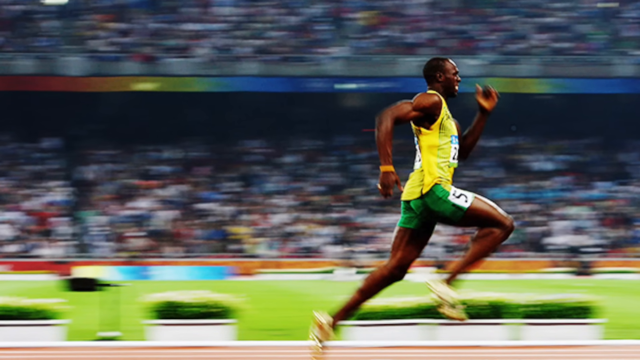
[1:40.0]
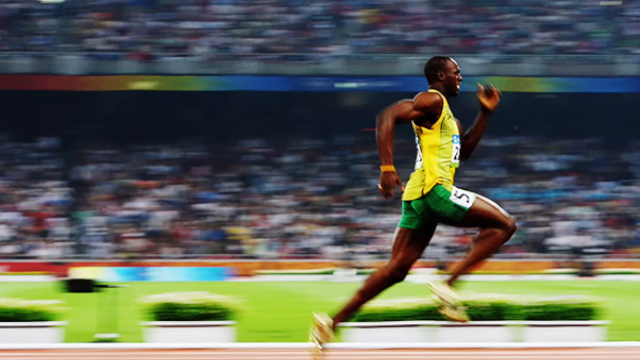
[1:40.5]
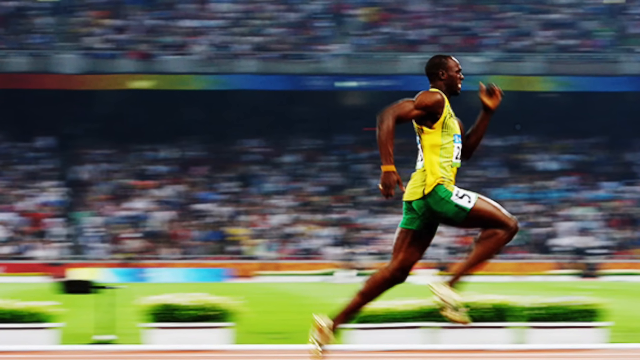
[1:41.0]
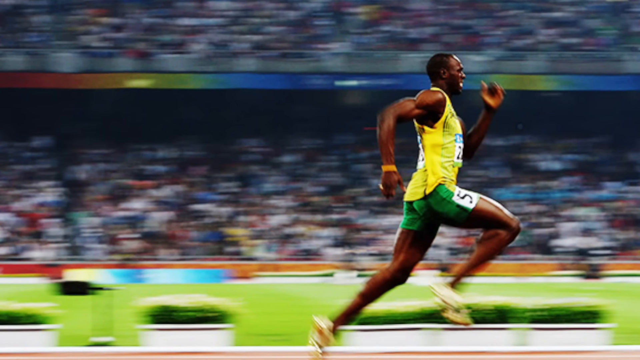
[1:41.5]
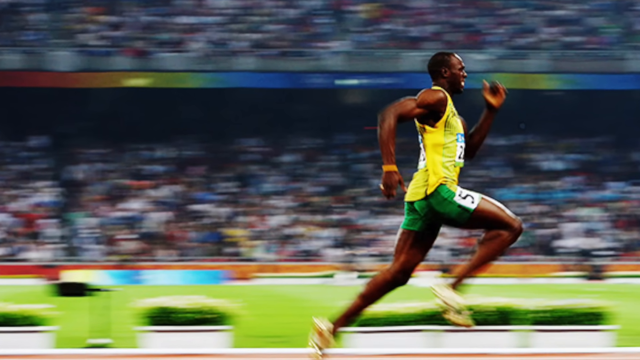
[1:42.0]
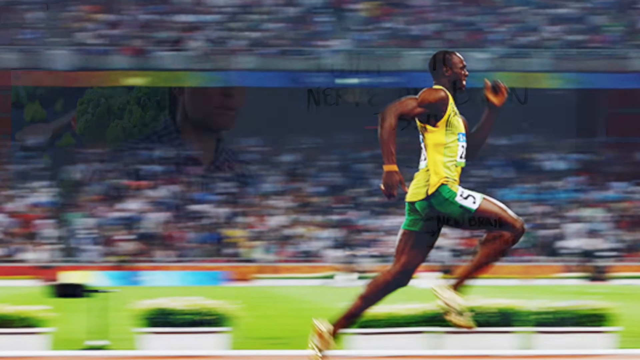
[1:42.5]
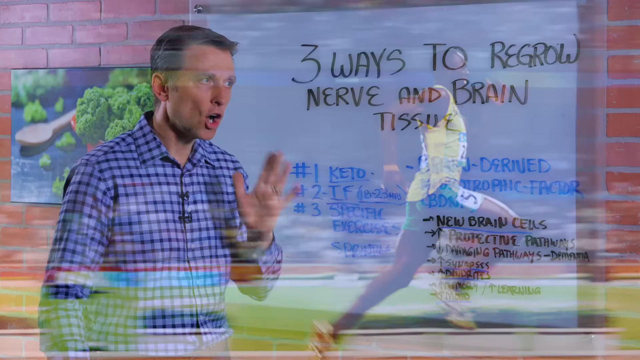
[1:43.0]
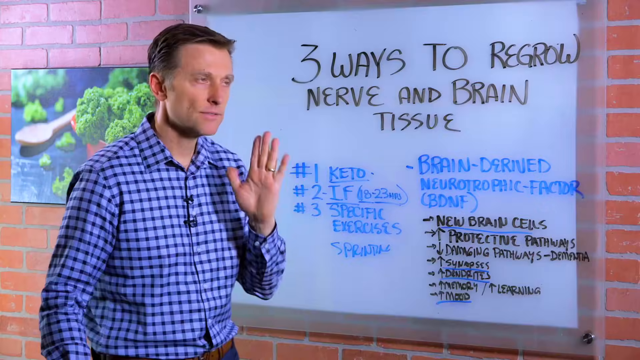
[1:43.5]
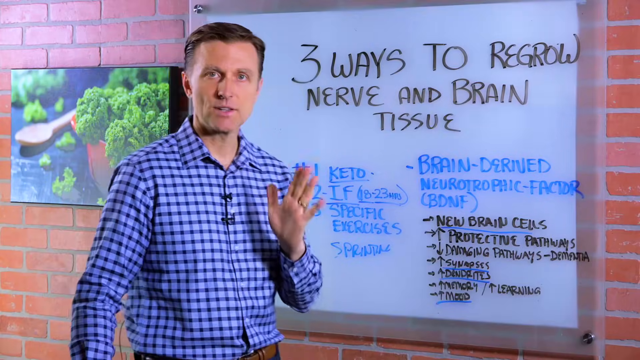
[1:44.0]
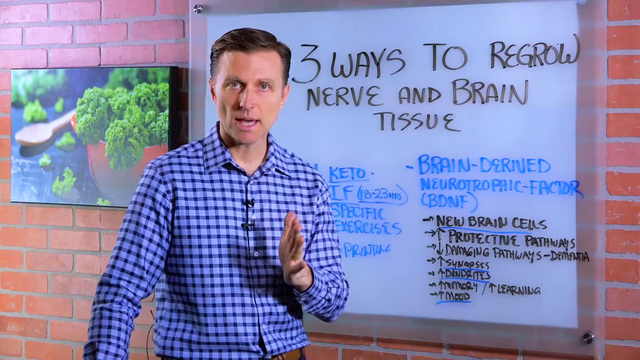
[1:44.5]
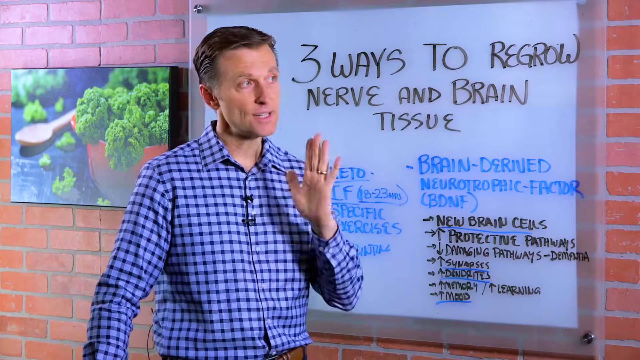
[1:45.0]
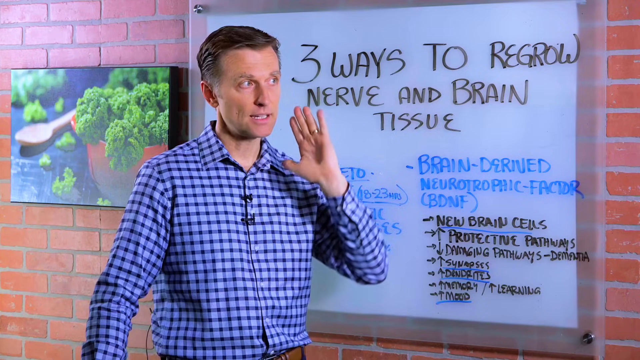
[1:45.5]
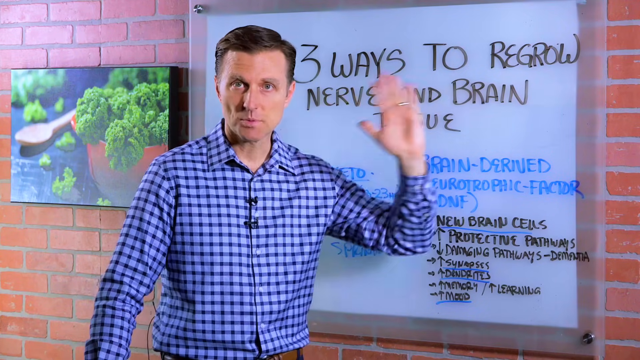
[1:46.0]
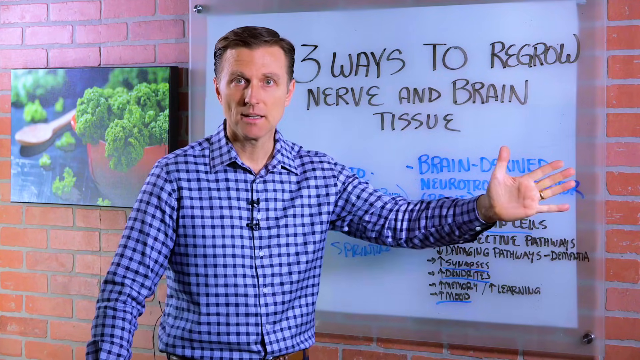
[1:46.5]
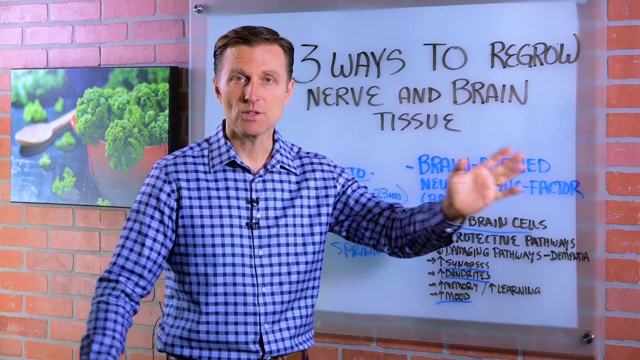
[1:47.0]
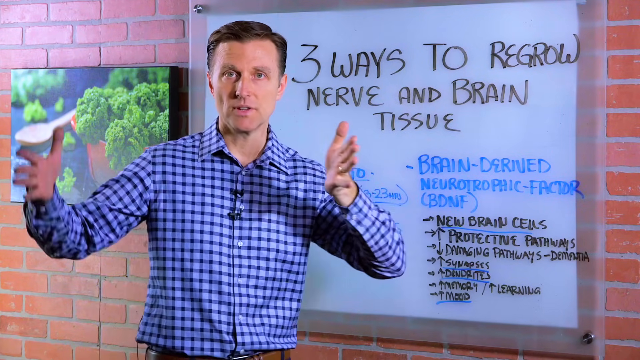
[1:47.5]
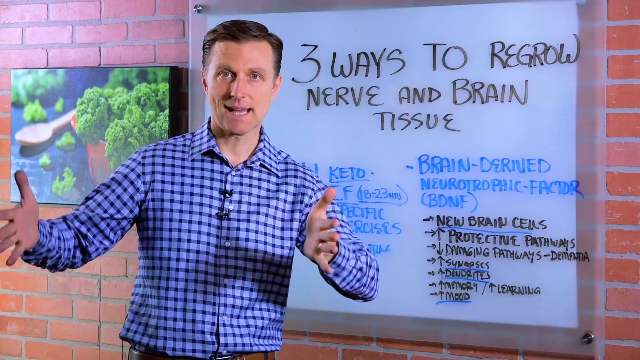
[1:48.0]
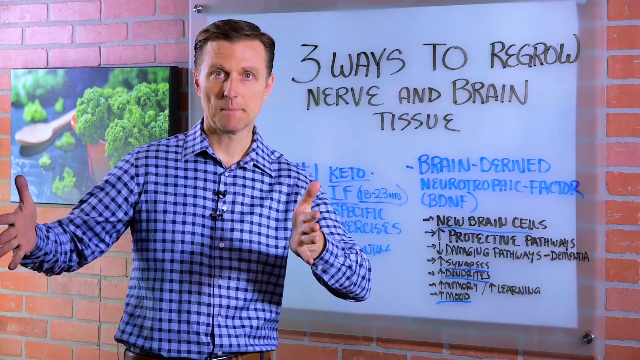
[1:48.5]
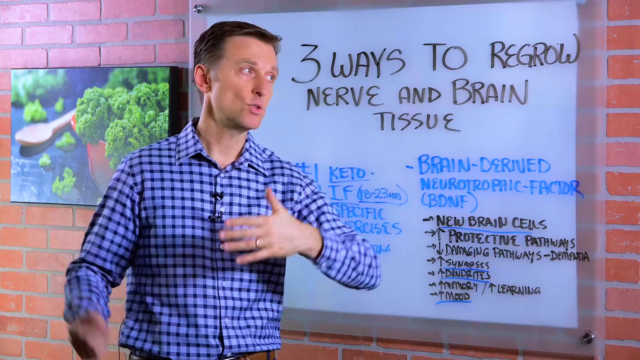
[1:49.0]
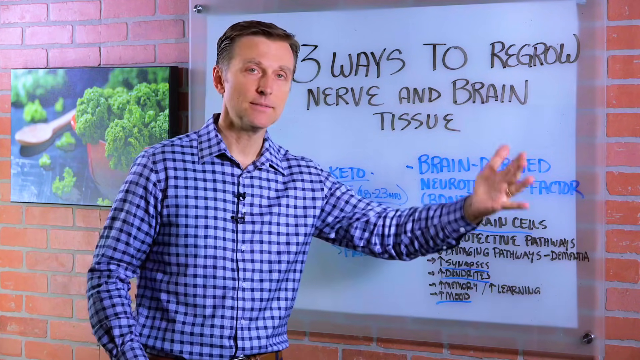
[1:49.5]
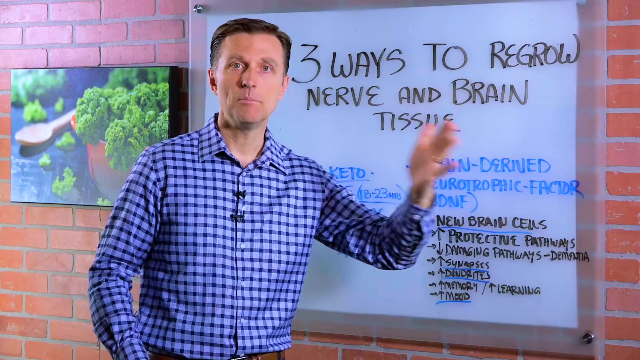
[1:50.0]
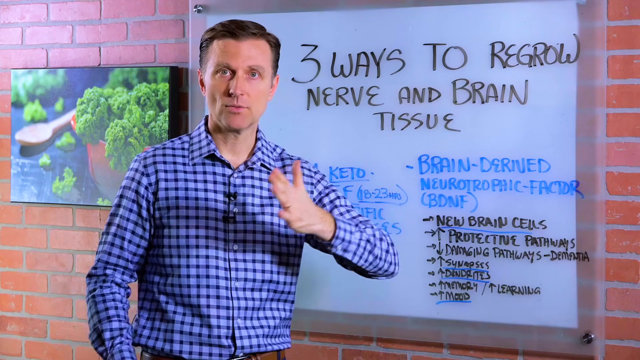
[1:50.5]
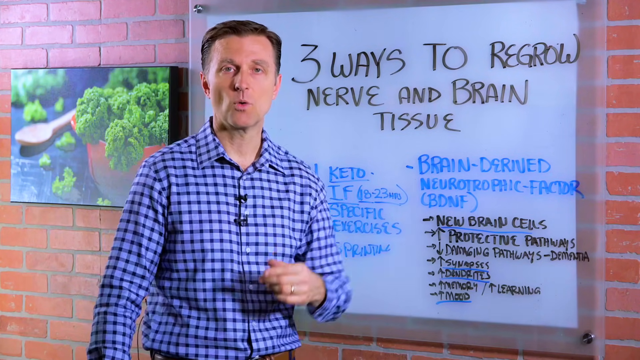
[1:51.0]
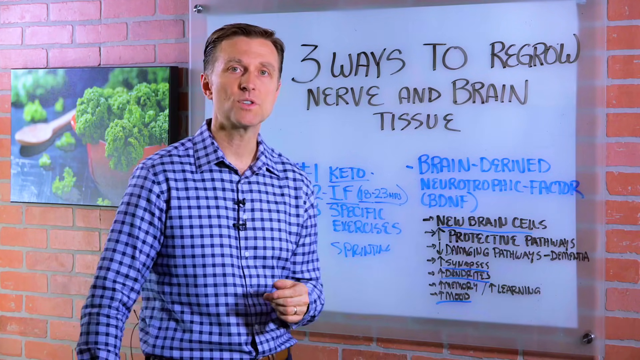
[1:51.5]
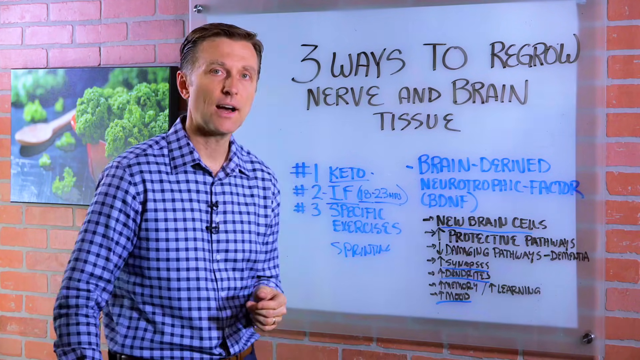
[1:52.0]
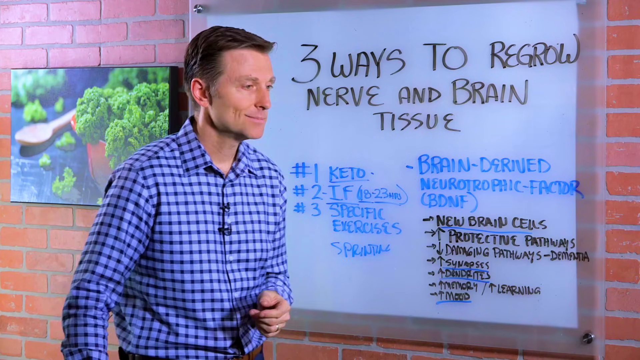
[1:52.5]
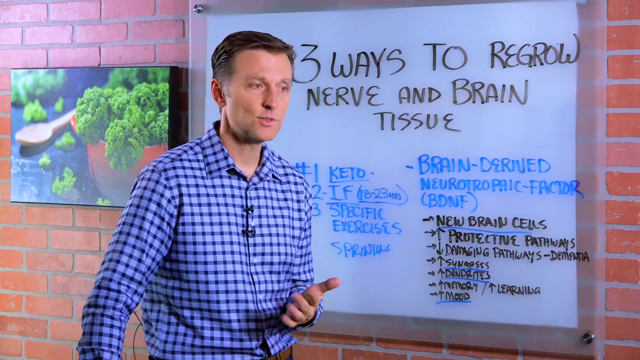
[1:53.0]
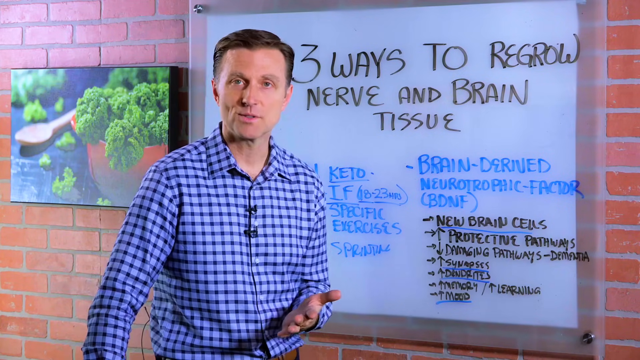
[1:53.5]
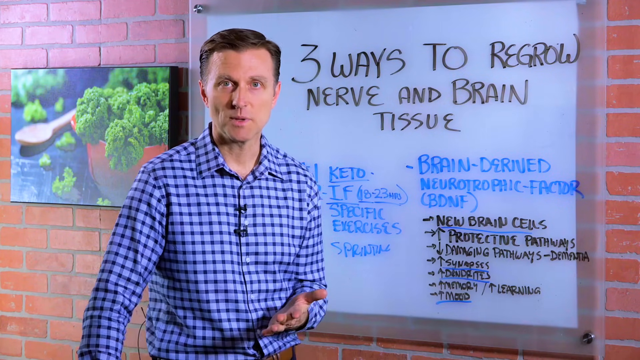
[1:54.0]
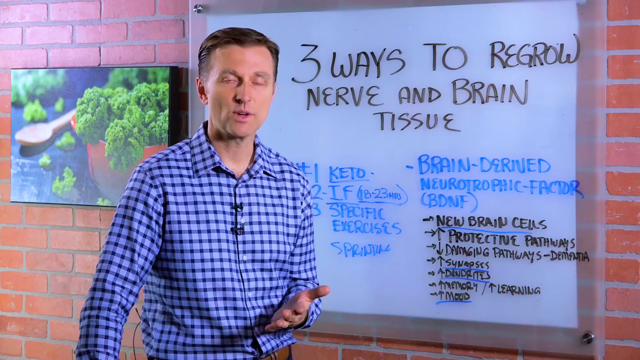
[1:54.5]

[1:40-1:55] A still picture of a runner, seemingly Usain Bolt, is shown, then the video cuts to a man in a purple plaid shirt talking to the camera. It cuts back to the runner and then again to the man, and the picture of the runner keeps appearing as he talks. Behind him a whiteboard reads "three ways to regrow nerve and brain tissue," and beneath it there seem to be key points, some in numbered lists and others seemingly in a bullet list. The whiteboard is attached to a brick wall, which also has a picture of a bowl with green vegetables on top, possibly broccoli or a leafy green vegetable. He keeps talking and tends to talk with his hands.